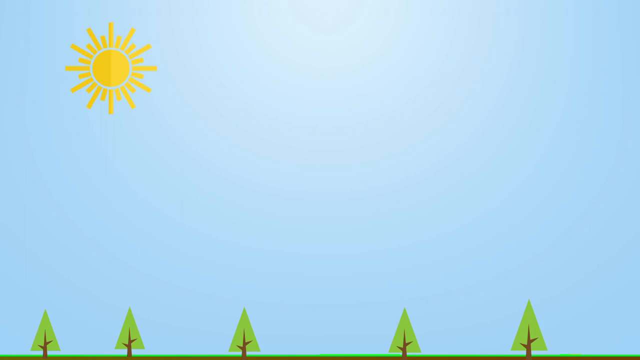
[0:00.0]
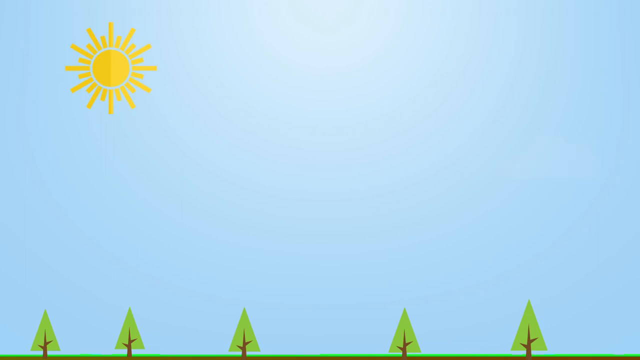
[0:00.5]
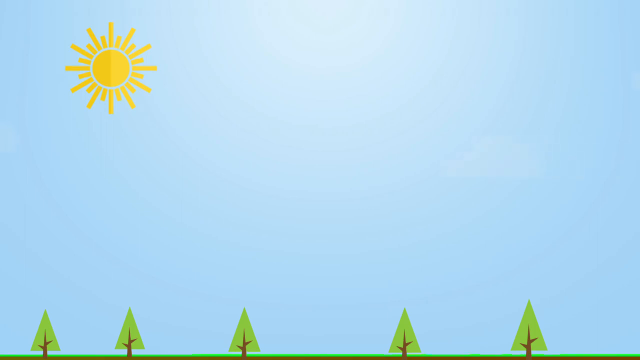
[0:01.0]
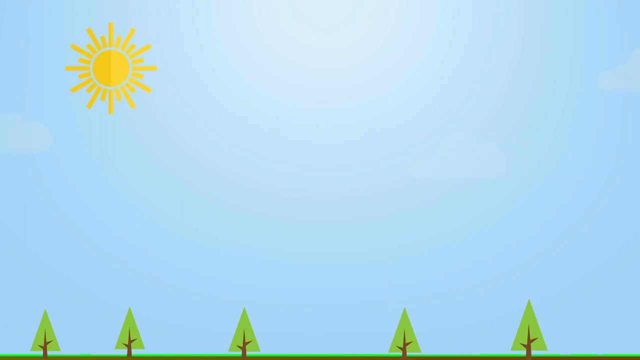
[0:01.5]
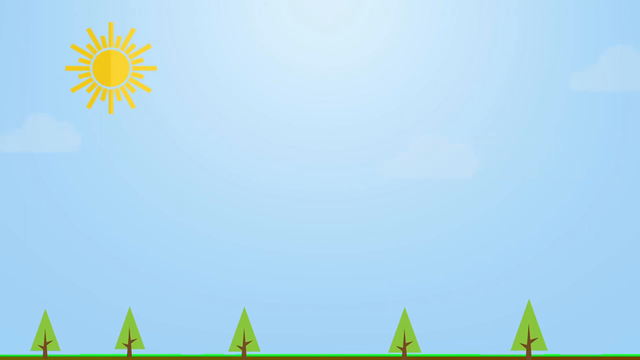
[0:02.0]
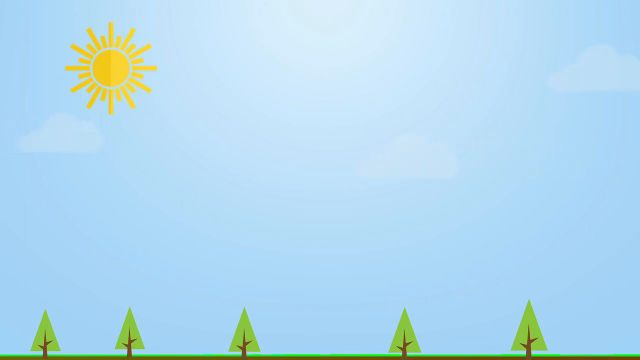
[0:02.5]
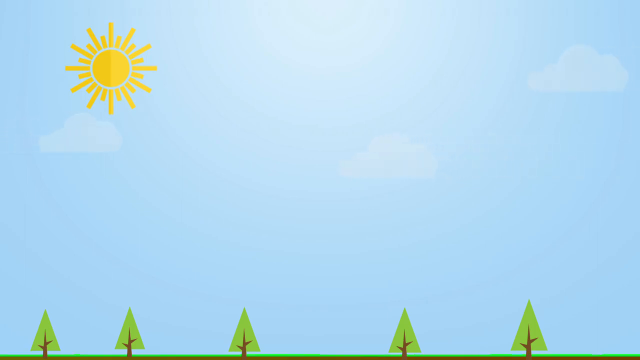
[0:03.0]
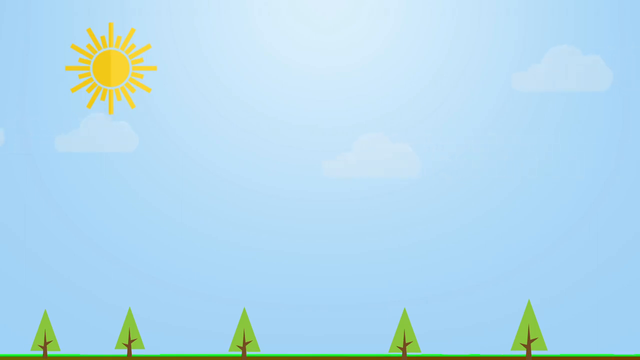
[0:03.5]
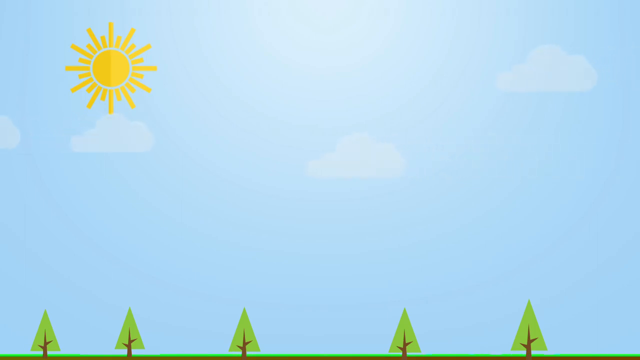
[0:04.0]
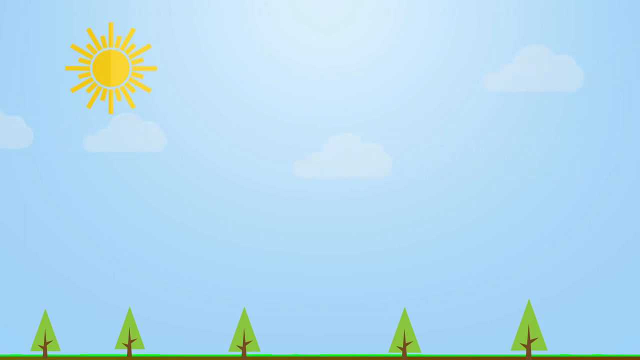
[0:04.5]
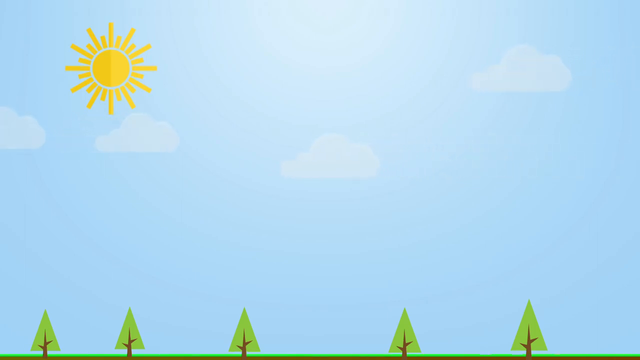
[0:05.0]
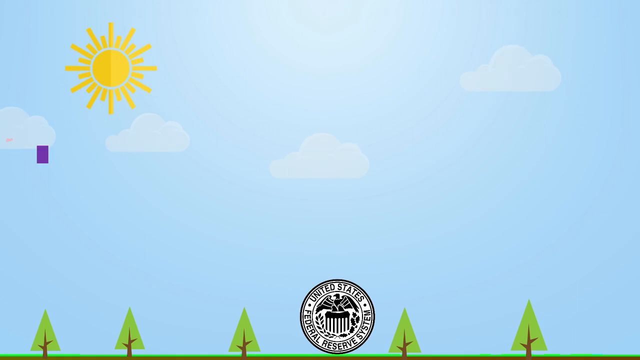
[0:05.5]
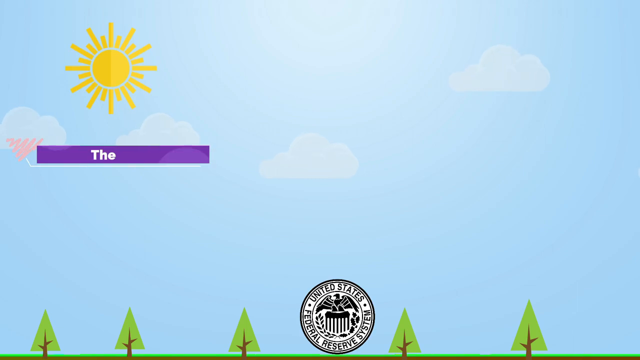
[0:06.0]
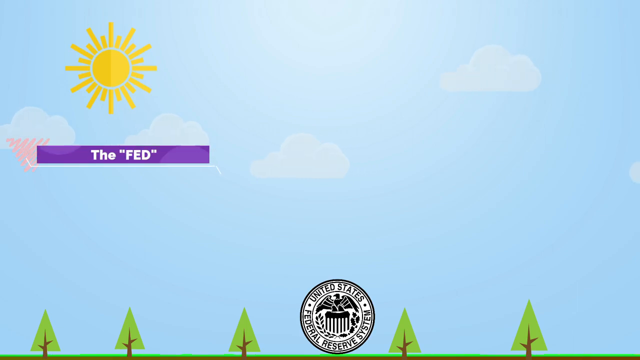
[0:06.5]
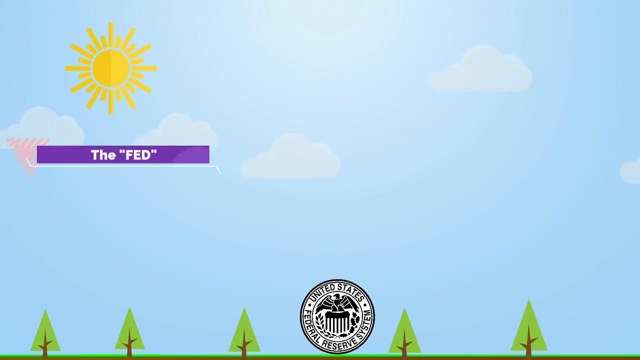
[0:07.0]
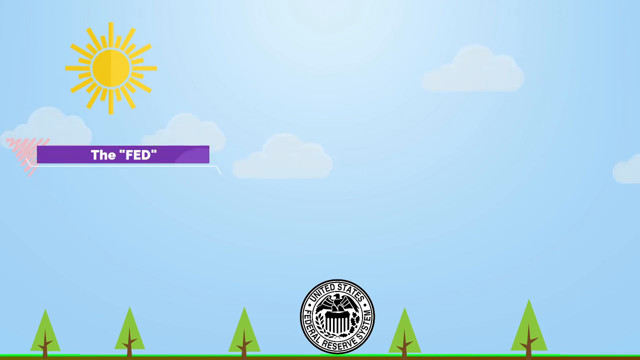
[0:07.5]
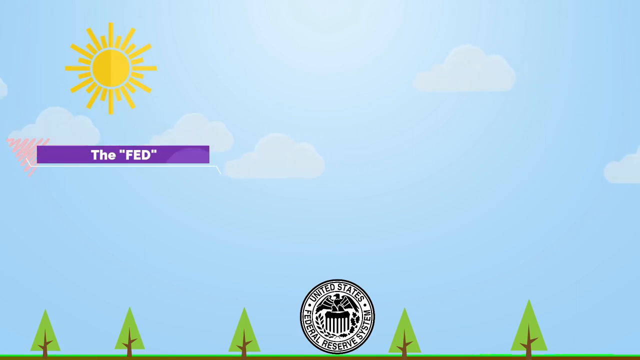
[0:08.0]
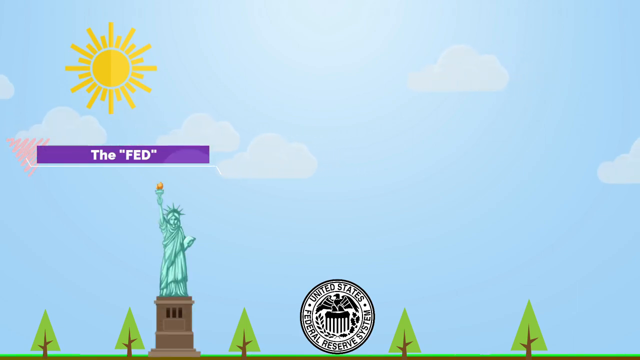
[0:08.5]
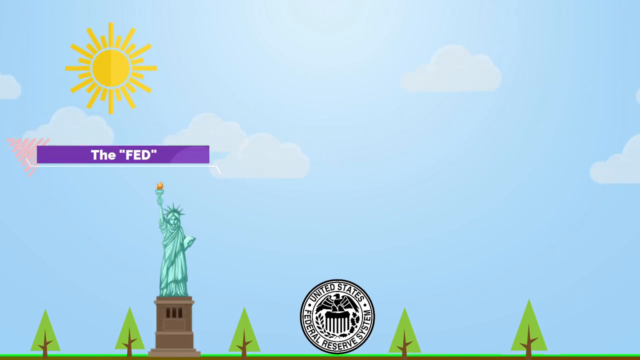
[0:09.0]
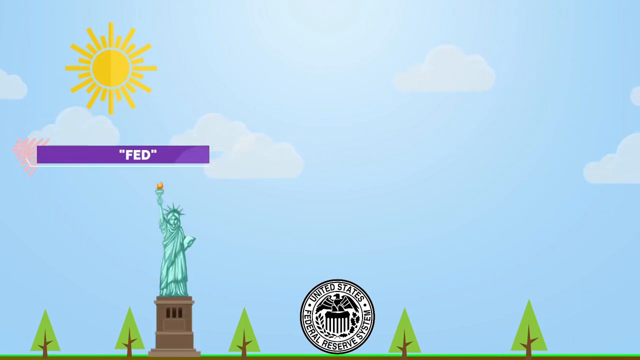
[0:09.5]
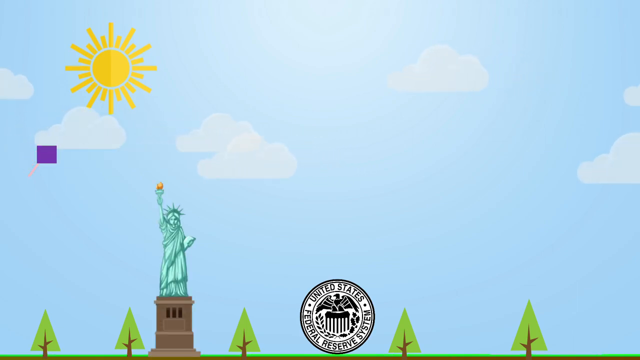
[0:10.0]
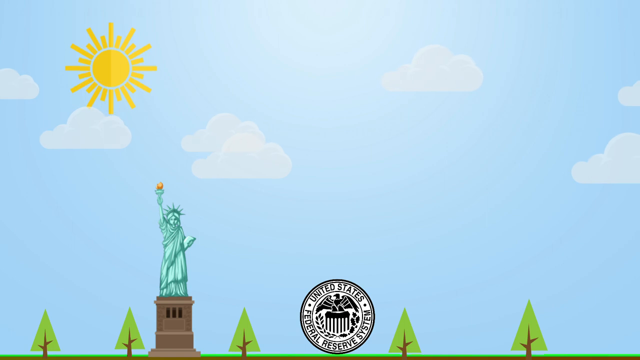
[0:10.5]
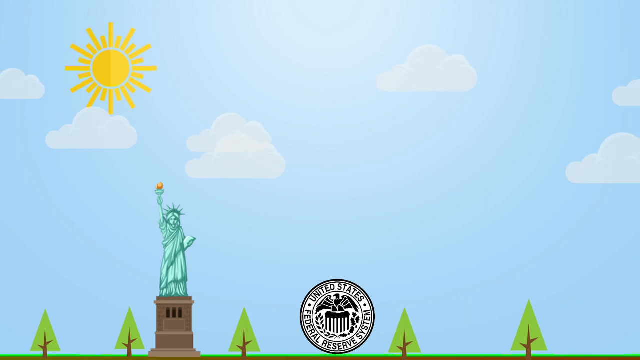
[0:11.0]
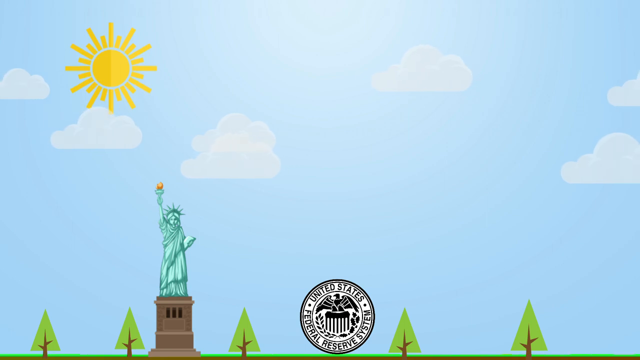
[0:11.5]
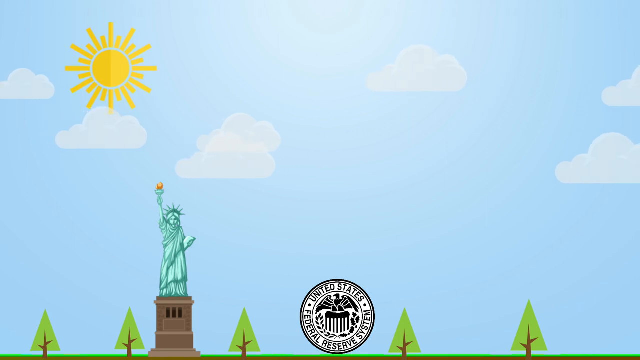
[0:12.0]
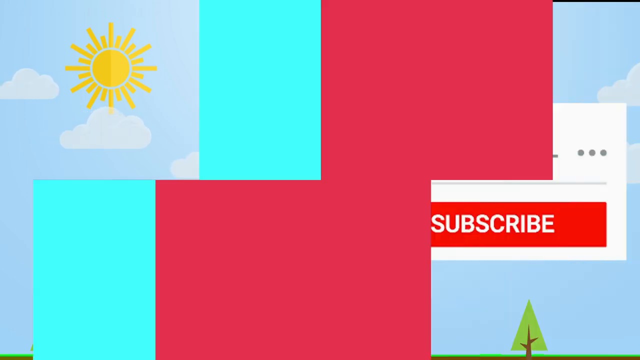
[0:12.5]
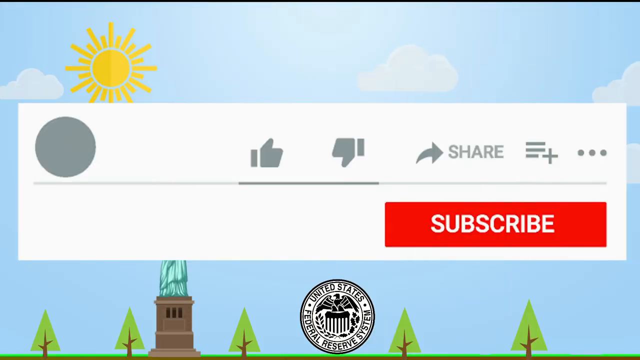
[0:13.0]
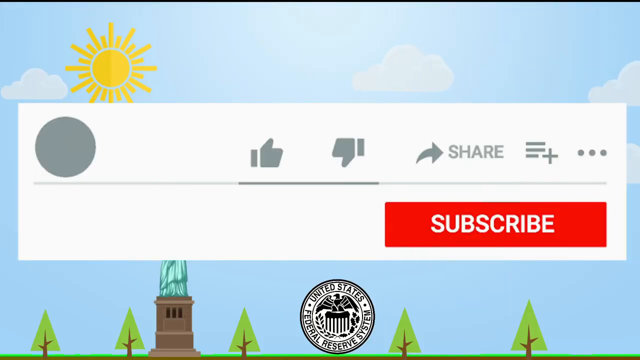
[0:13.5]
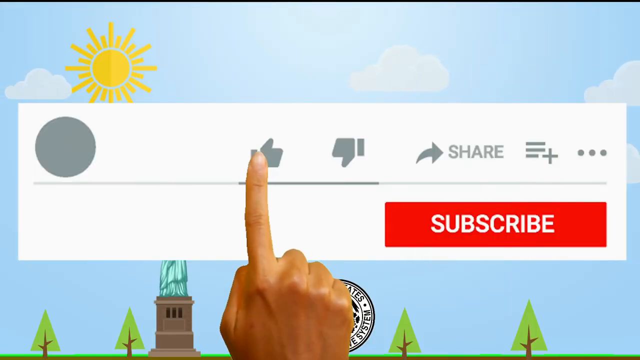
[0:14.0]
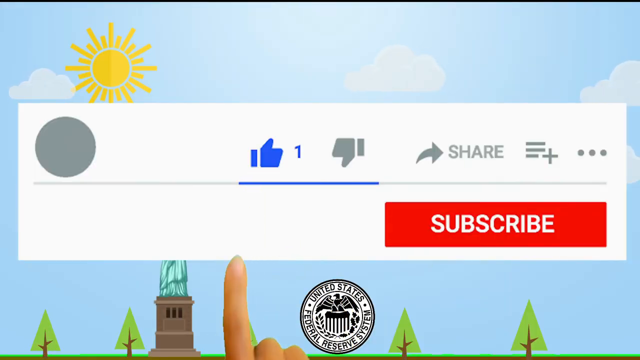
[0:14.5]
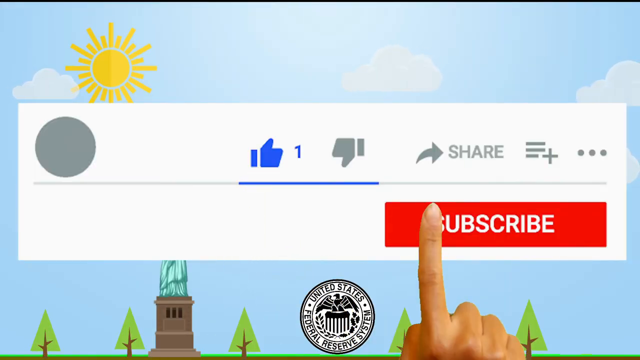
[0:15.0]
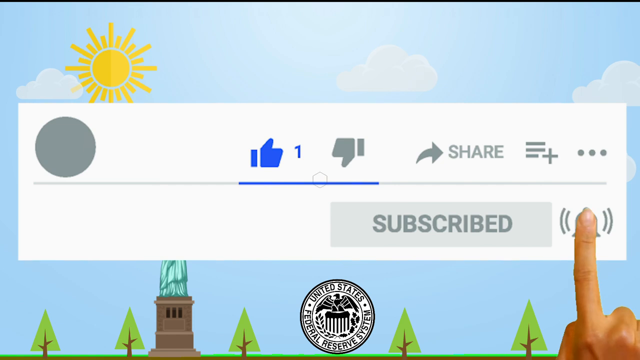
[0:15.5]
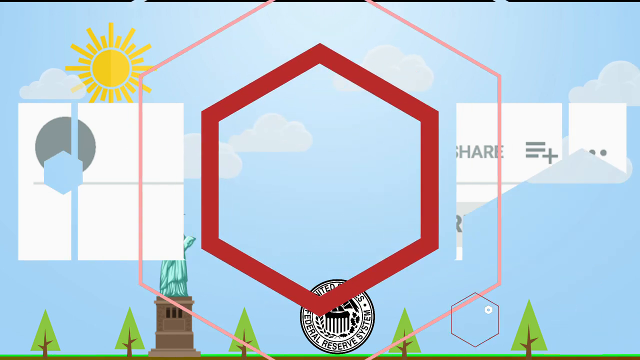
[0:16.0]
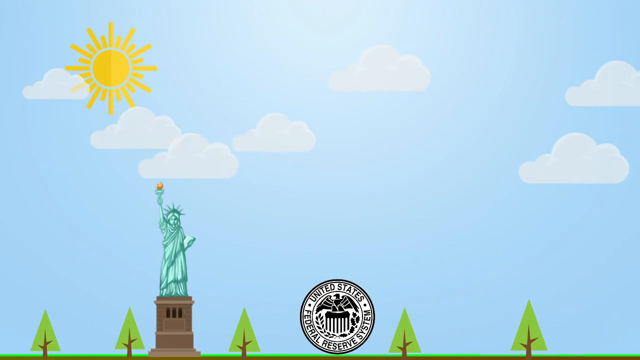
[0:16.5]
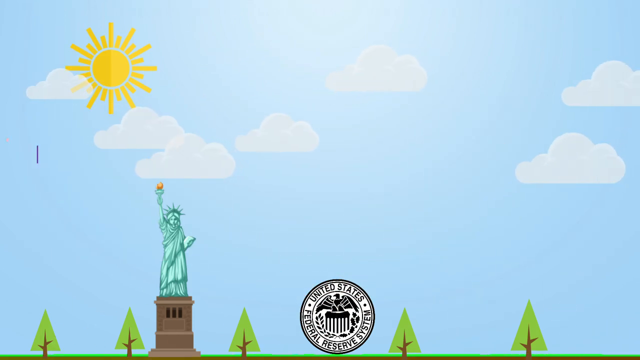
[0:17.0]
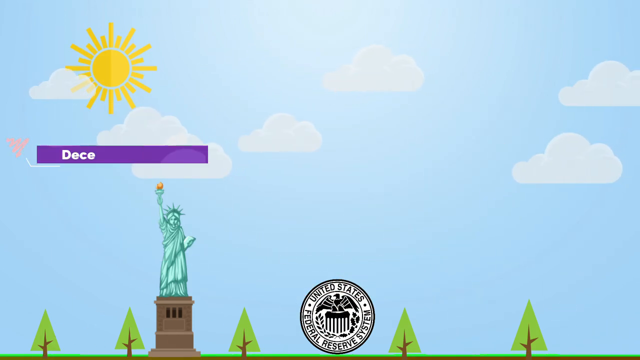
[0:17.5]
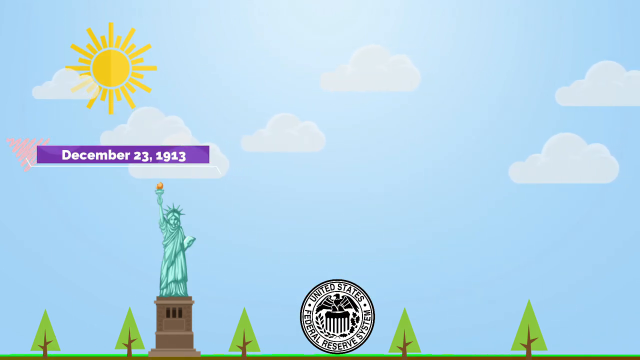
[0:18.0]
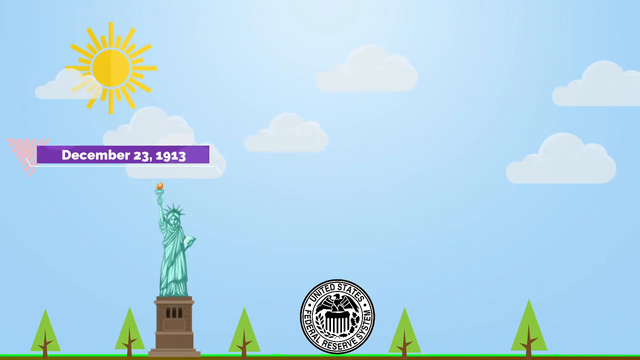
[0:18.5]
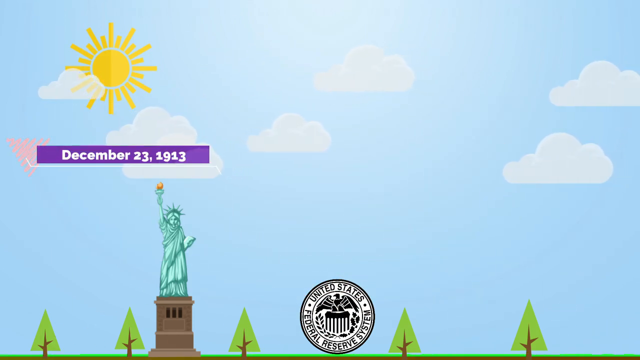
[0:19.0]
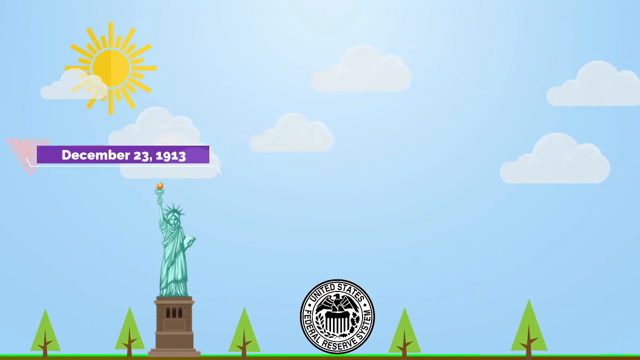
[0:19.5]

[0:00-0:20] The video opens on a light blue sky with four fairly white clouds and a yellow sun in the top left corner. Below, at the bottom of the screen, is an emblem of the United States Federal Reserve System, along with five green trees. A banner appears that says "The Fed", with "Fed" in quotation marks, on a purple background, and the Statue of Liberty flashes on the screen: a green figure with an outstretched hand holding a torch, standing on a mount. The video fades out and into a banner that says "Subscribe". A hand presses a like icon, a subscribe button and a bell icon, and a hexagon-shaped line zooms out of the frame. The scene slides into another banner that says "December 23, 1913" on a purple background.